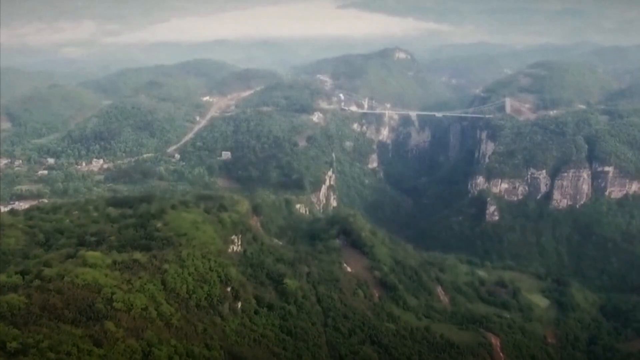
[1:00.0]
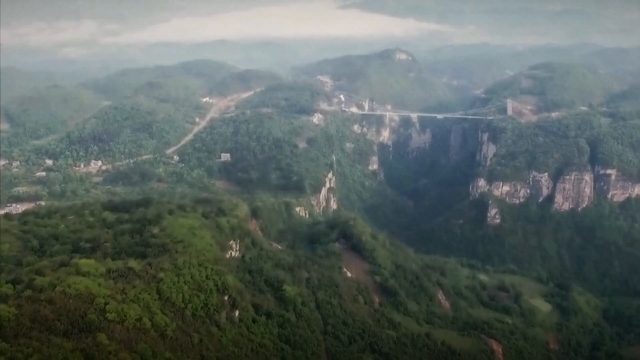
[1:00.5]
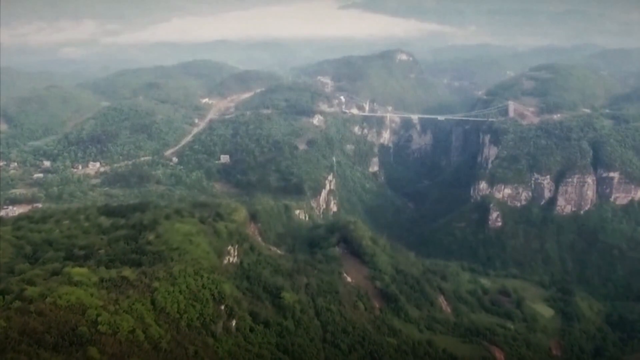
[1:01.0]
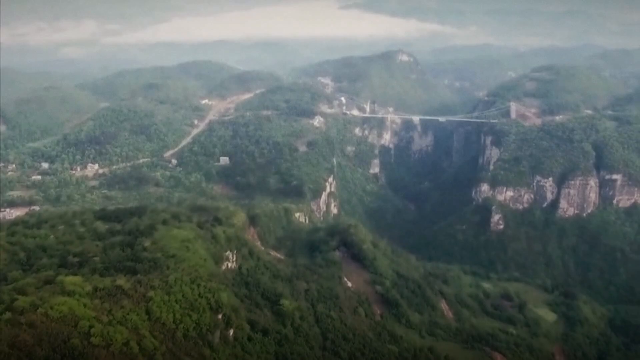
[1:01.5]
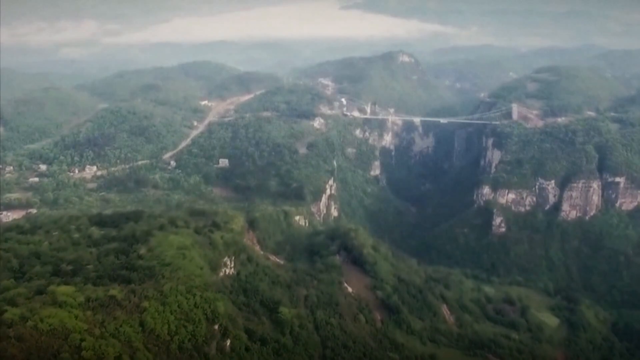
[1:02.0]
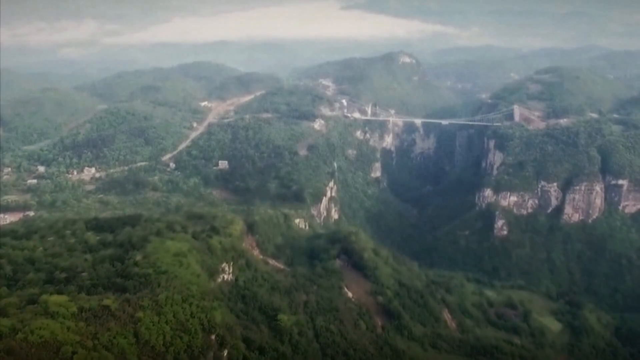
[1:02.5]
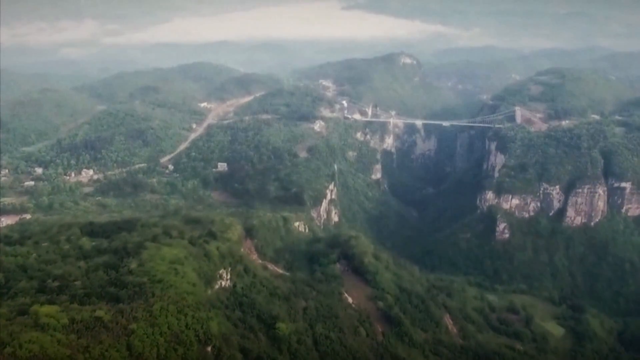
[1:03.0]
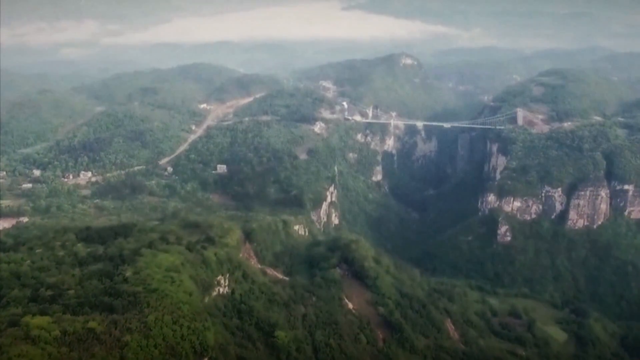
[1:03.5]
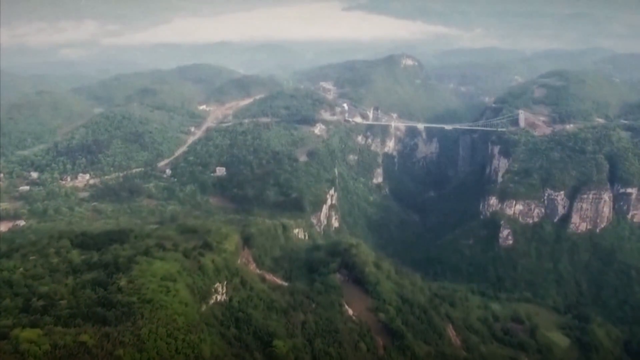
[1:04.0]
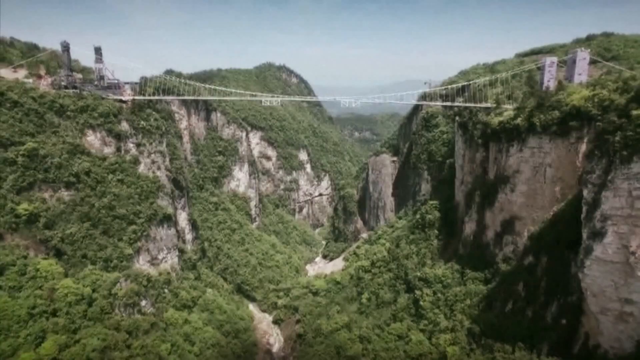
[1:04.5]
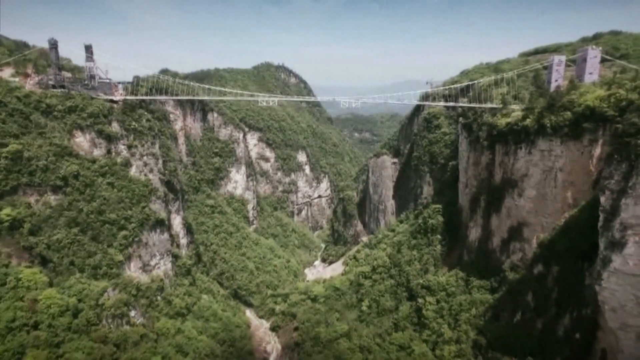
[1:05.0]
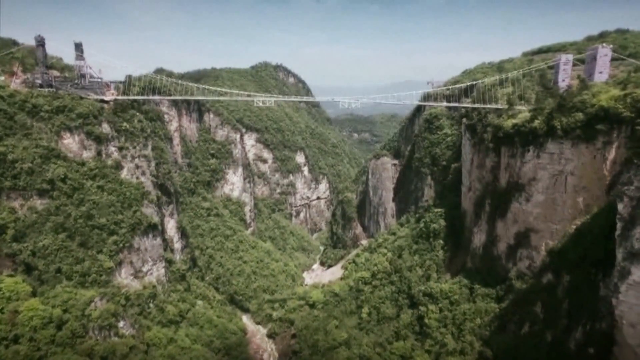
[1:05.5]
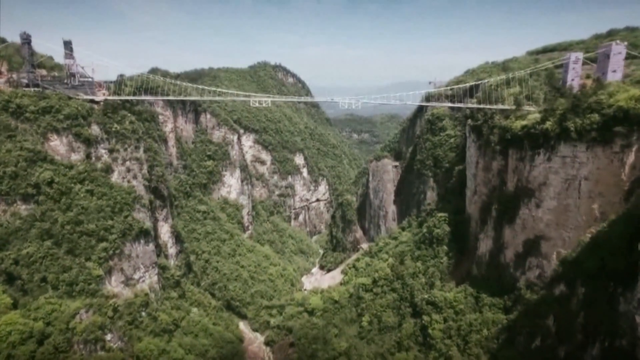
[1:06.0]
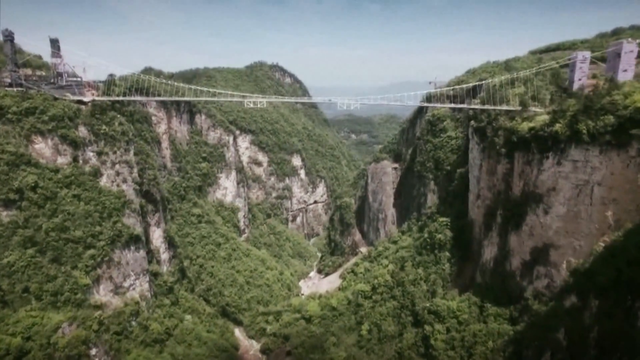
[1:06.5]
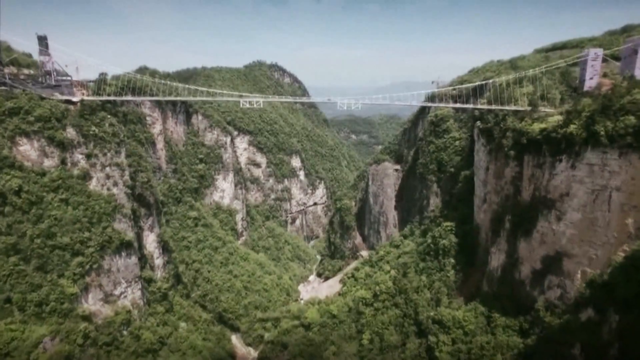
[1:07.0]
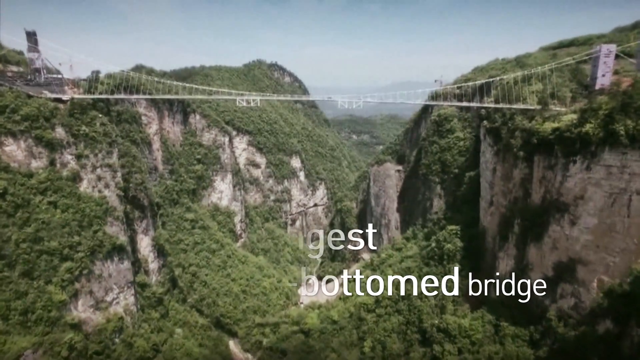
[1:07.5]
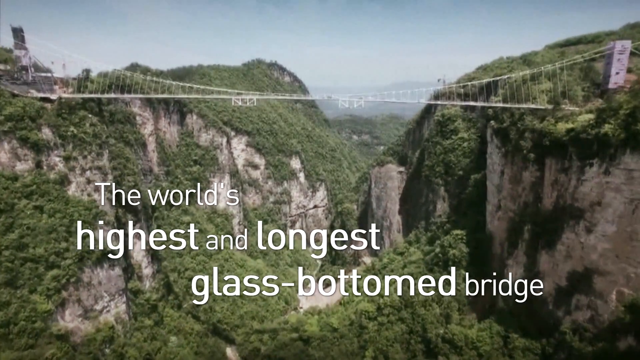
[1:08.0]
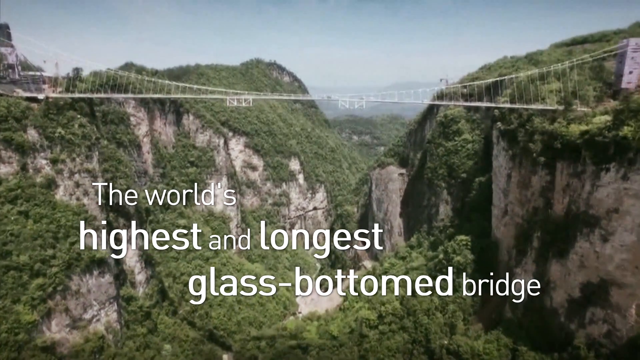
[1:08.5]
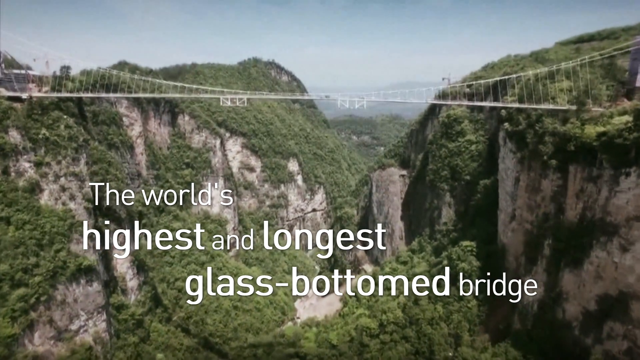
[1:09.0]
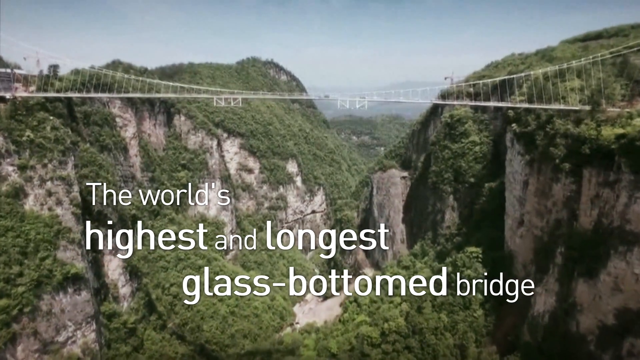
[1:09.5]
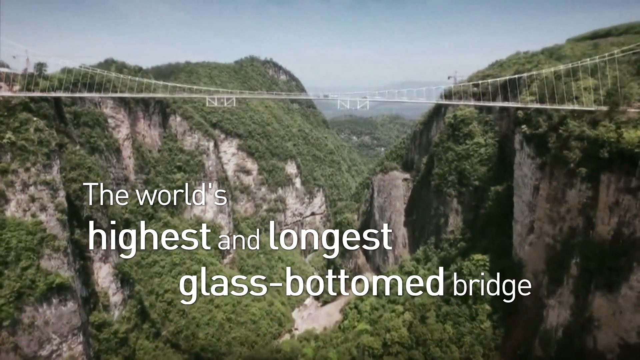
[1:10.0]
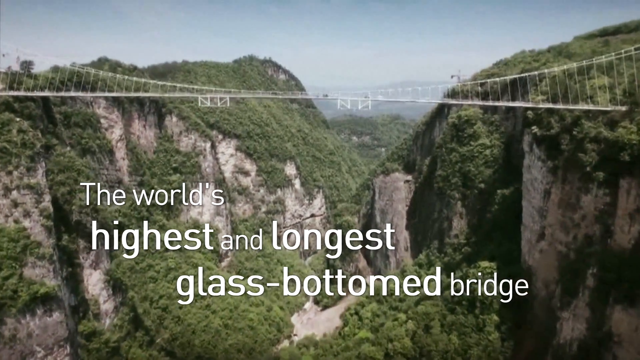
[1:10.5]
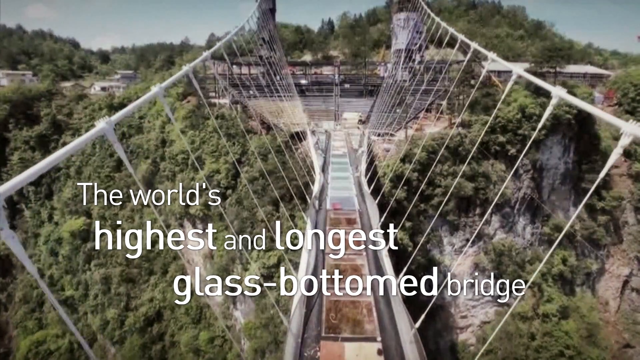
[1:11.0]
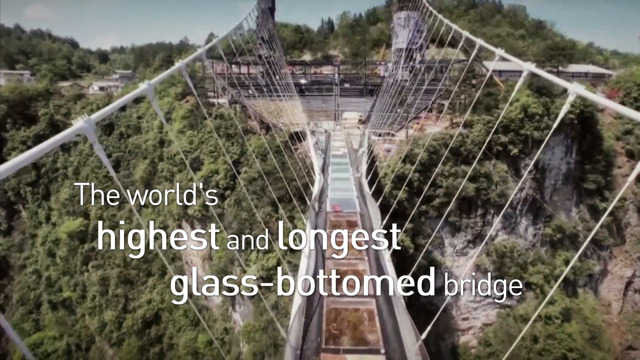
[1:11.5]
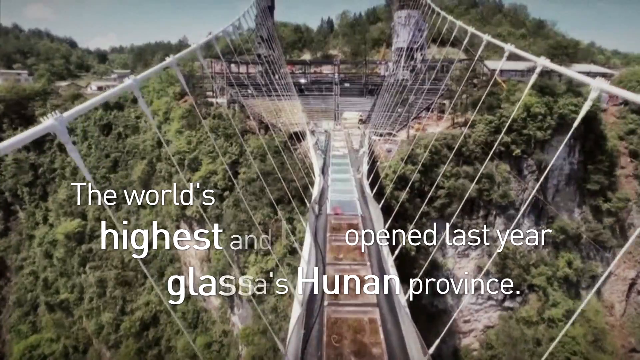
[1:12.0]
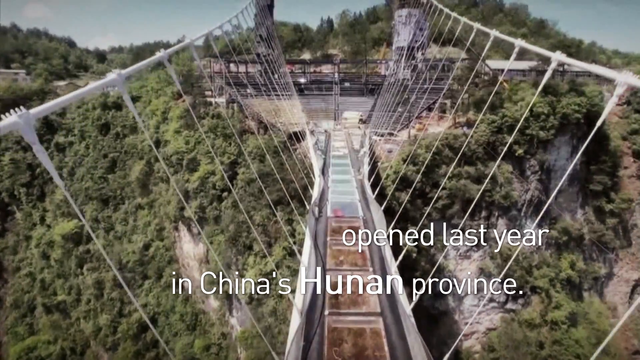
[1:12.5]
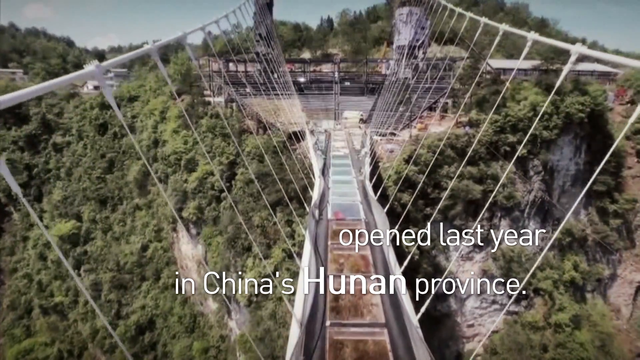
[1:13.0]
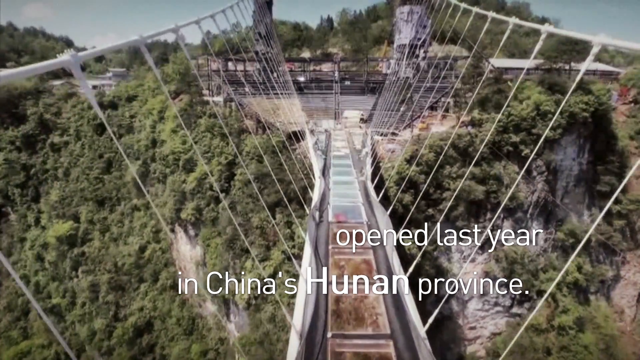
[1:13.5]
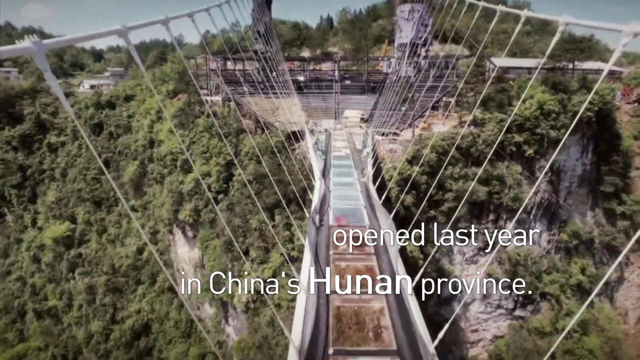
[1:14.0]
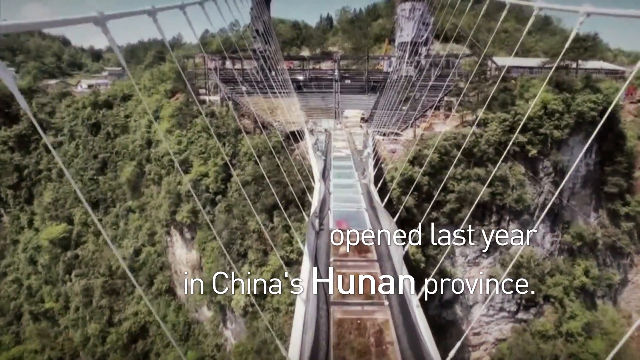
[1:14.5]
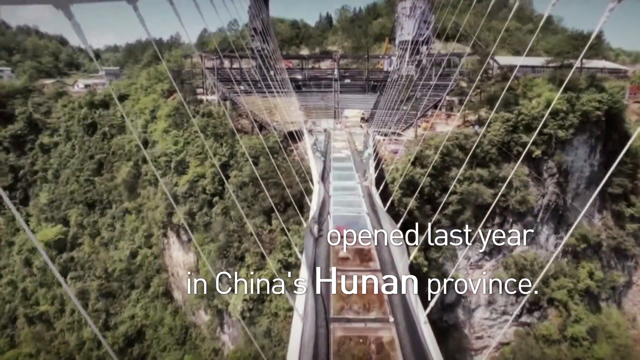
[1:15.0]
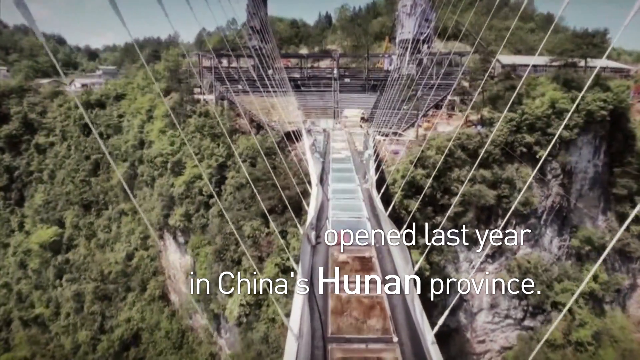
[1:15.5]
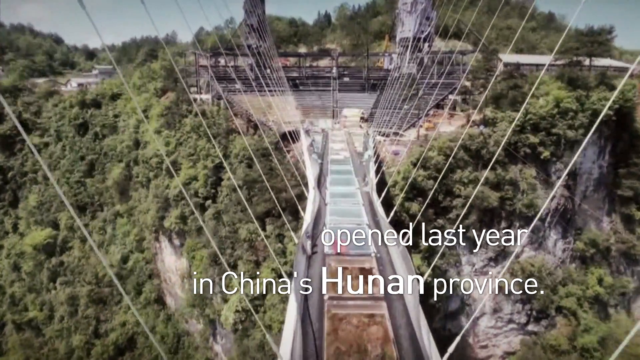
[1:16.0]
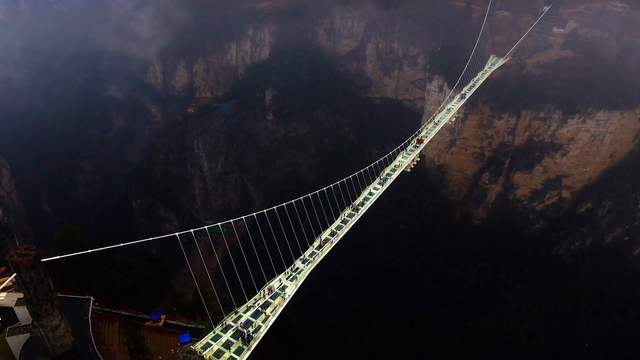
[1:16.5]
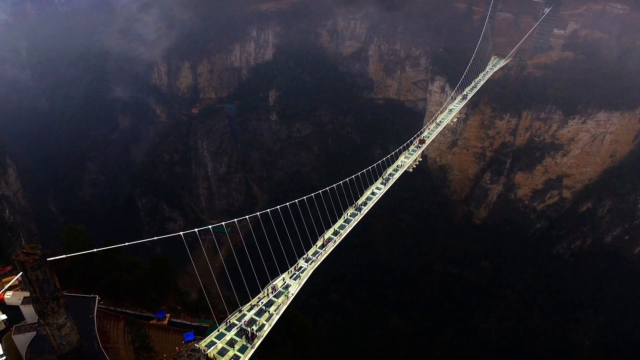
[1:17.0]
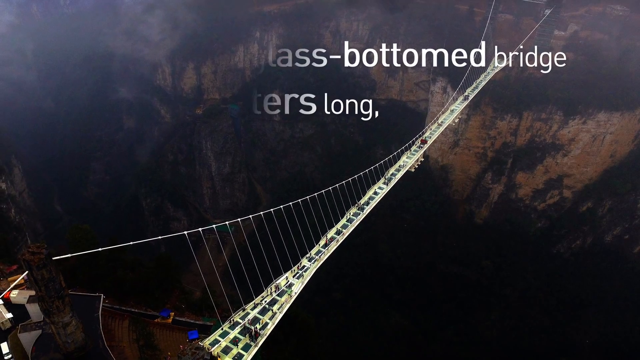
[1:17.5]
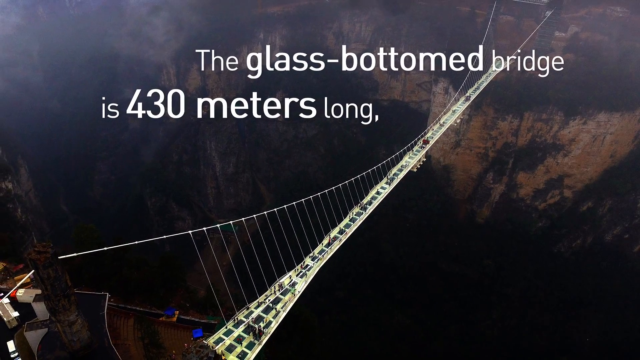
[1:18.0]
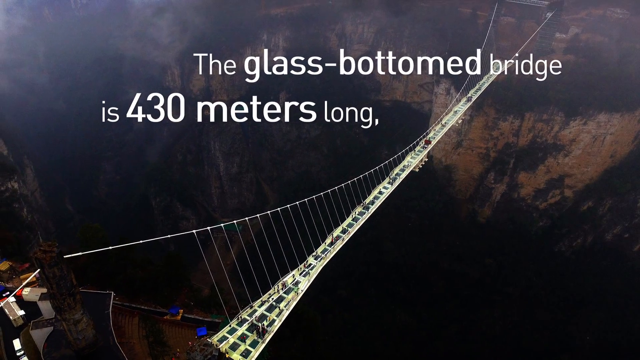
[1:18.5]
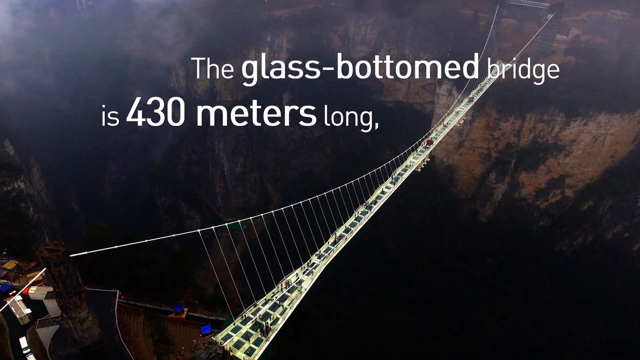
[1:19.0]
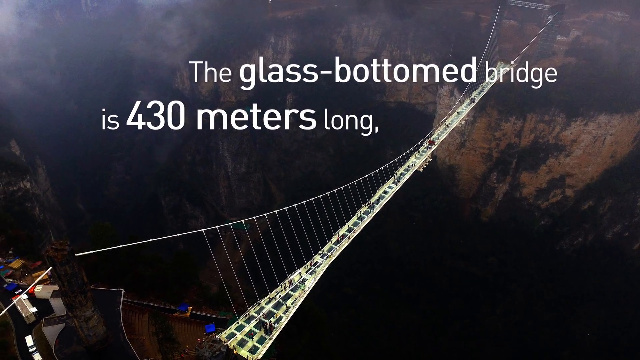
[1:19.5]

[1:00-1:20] A drone shot moves over mountains filled with trees, with mist and clouds in the sky. The camera keeps moving past them, zooms in and moves upward over trees, revealing a white bridge connecting one mountain to another across from it. Text reads "the world's highest and longest glass bottom bridge." The bridge is very long and expansive. The shot shows the bridge in its entirety, zooming through it, and then a still shot of it appears with text reading "the glass bottom bridge is 430 meters long." The still shot shows how long the bridge is as people walk over it, and it is near the clouds, far above the ground.